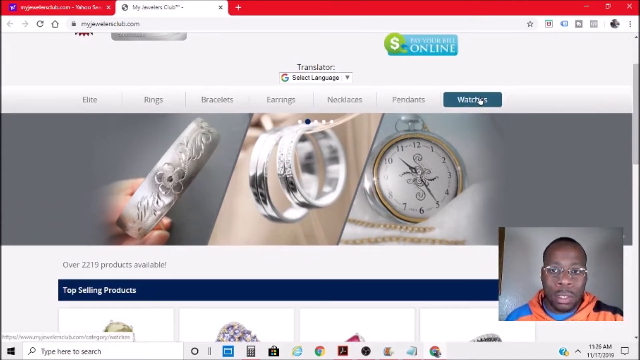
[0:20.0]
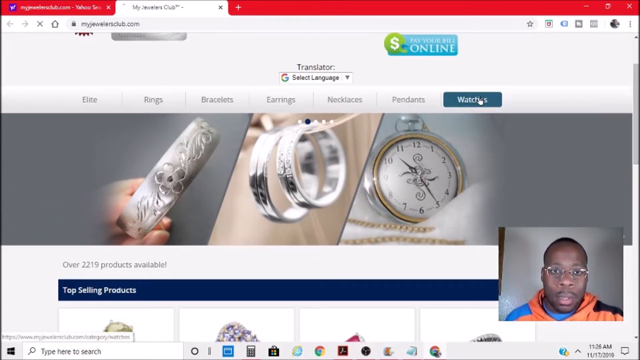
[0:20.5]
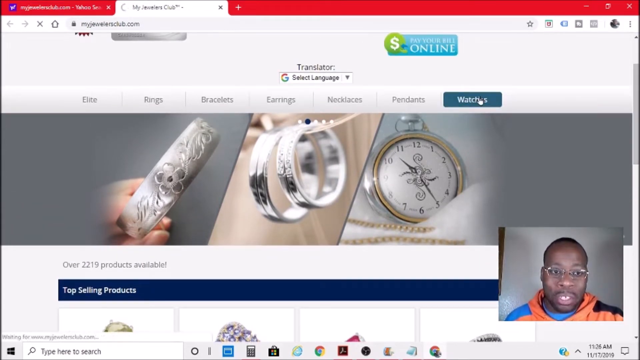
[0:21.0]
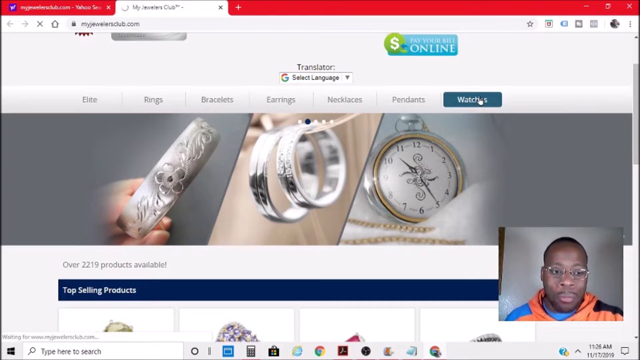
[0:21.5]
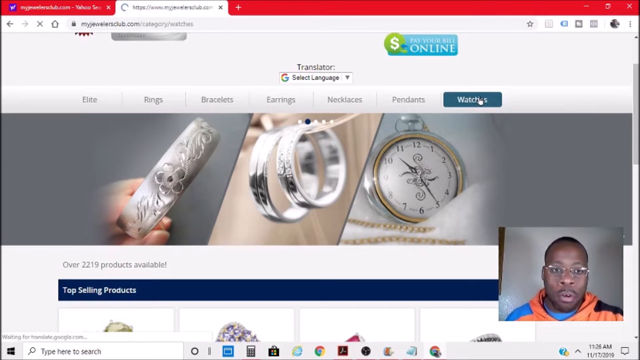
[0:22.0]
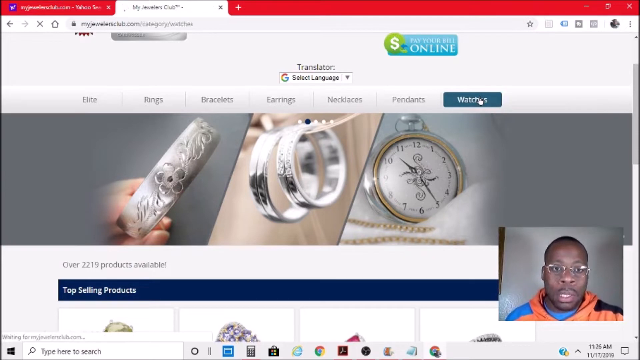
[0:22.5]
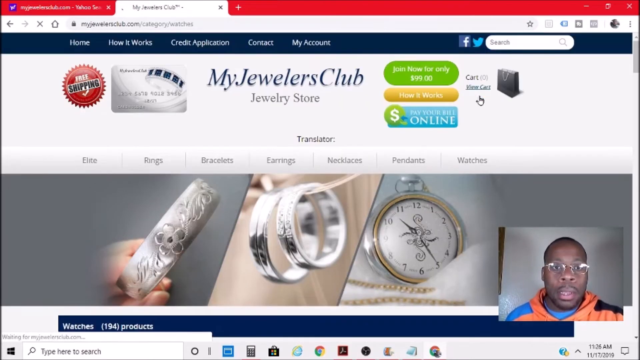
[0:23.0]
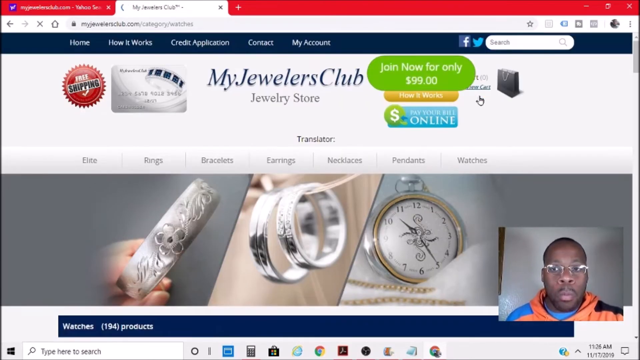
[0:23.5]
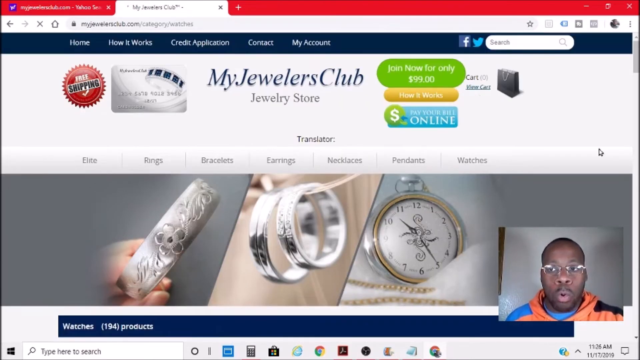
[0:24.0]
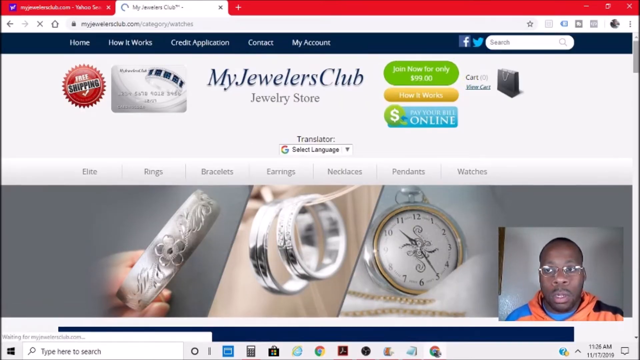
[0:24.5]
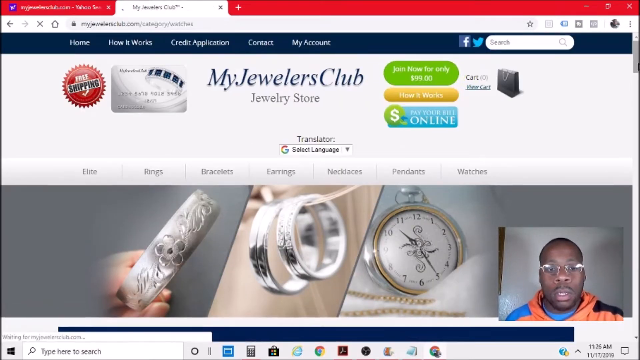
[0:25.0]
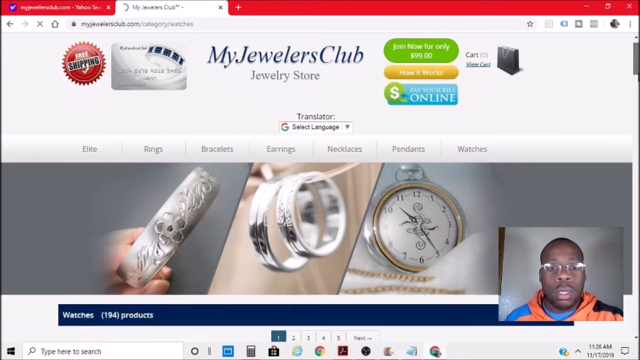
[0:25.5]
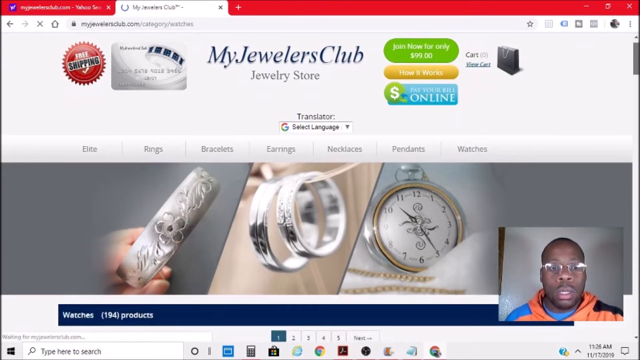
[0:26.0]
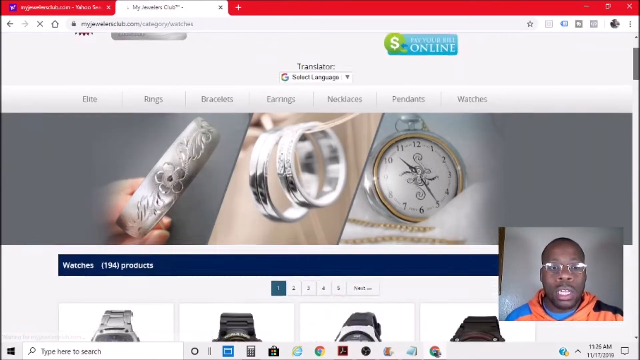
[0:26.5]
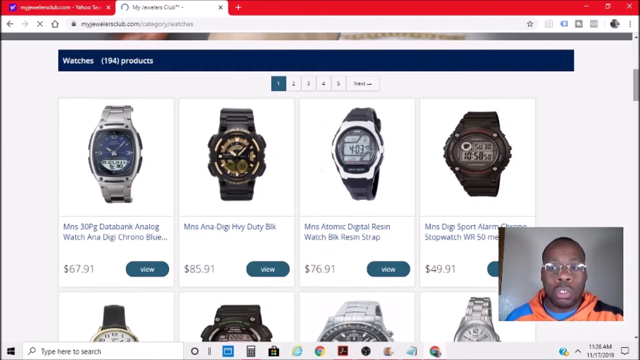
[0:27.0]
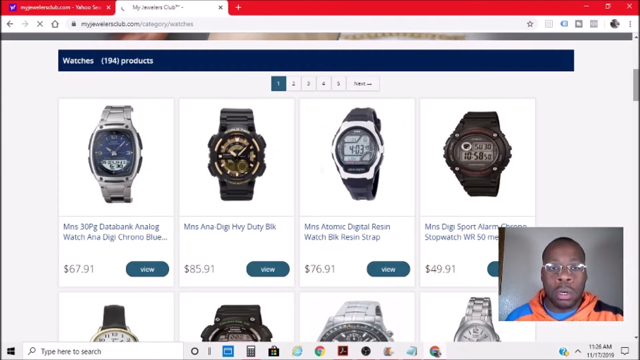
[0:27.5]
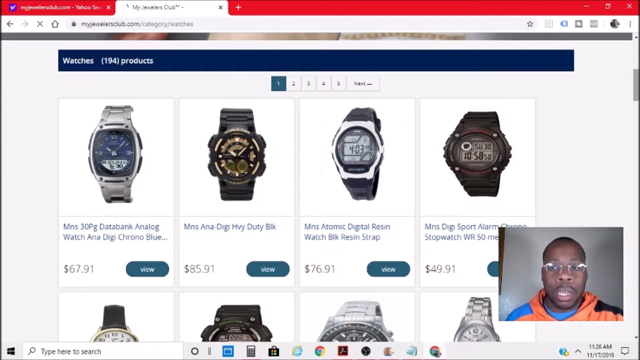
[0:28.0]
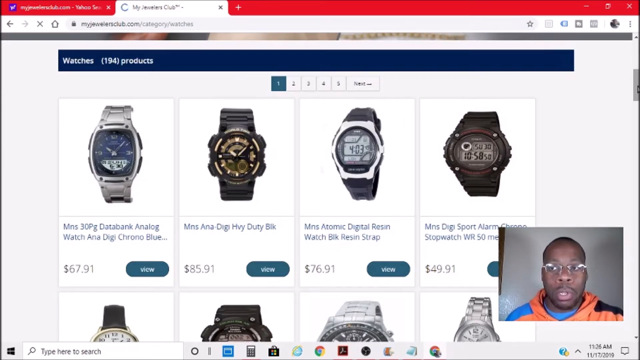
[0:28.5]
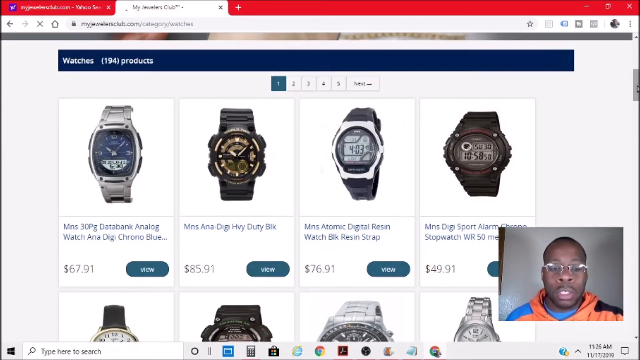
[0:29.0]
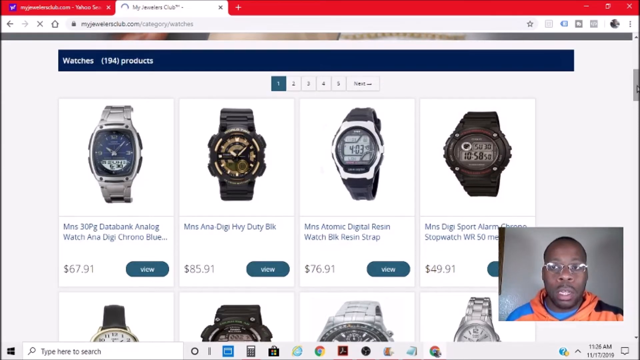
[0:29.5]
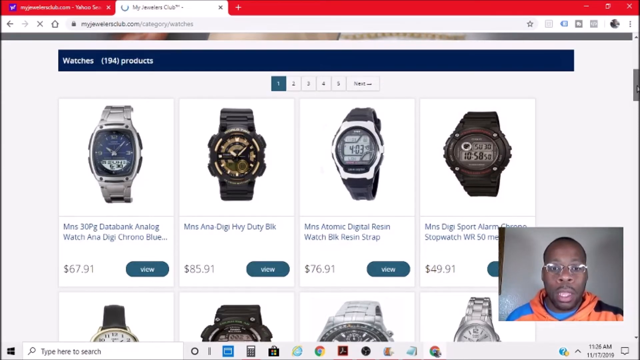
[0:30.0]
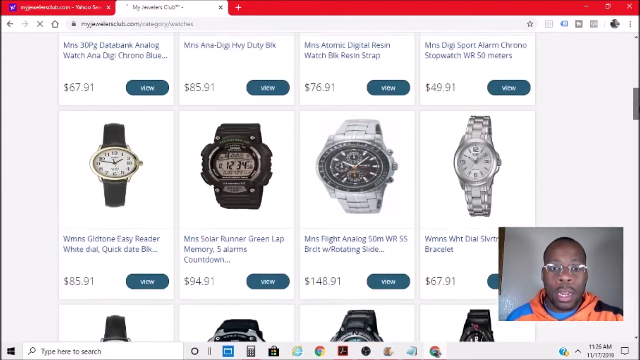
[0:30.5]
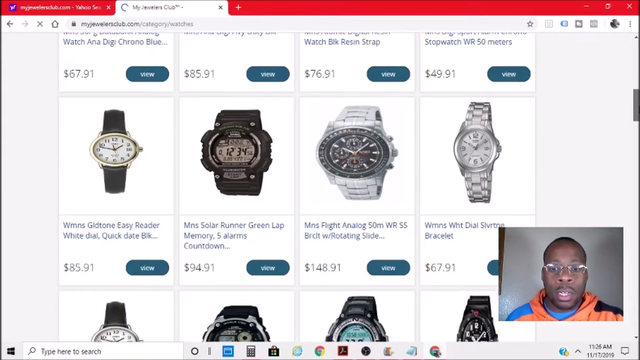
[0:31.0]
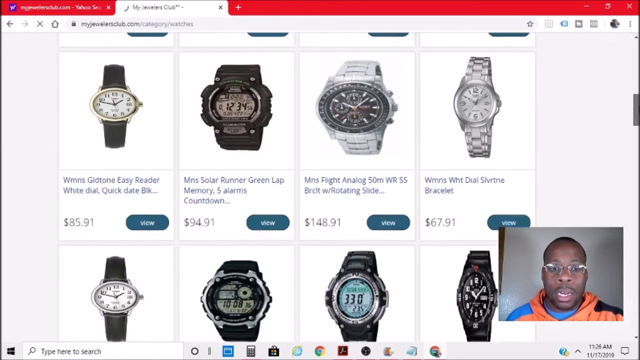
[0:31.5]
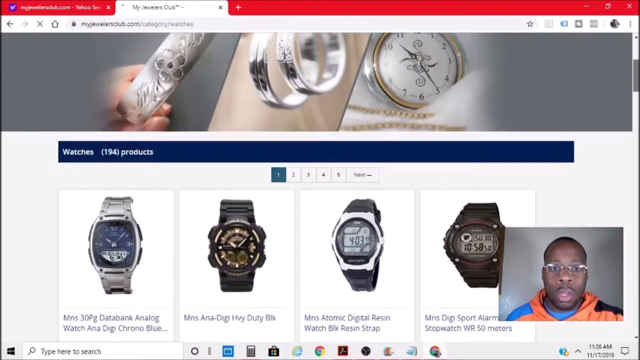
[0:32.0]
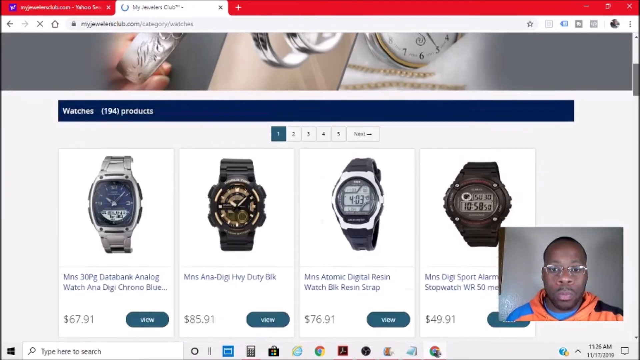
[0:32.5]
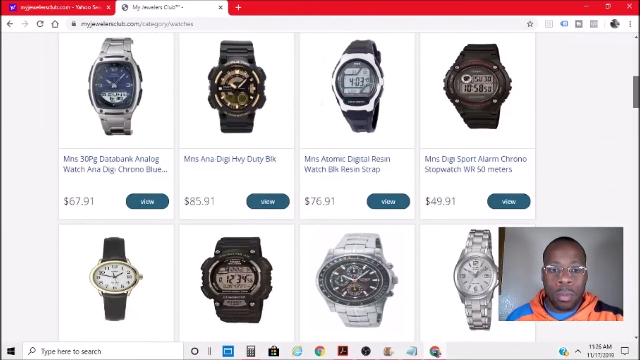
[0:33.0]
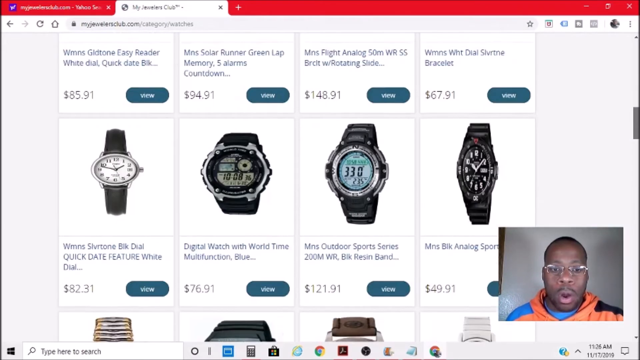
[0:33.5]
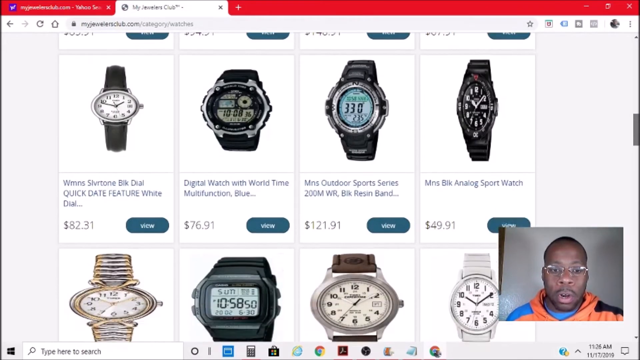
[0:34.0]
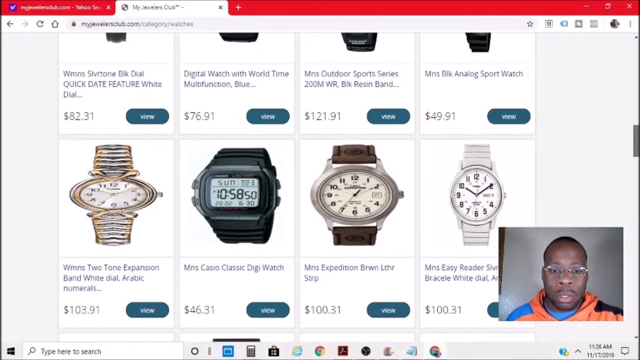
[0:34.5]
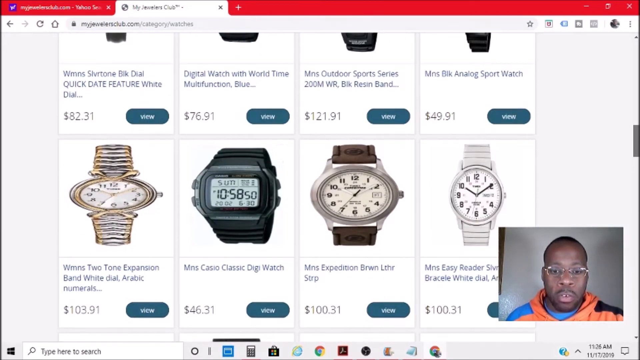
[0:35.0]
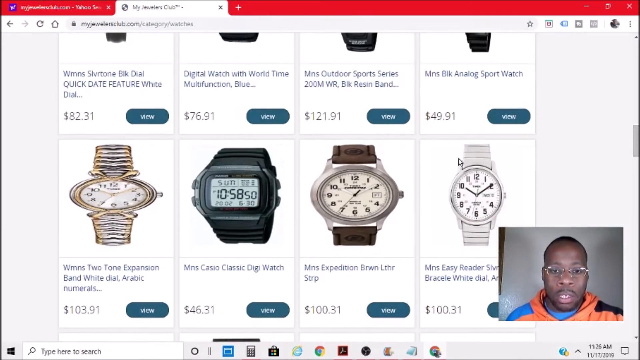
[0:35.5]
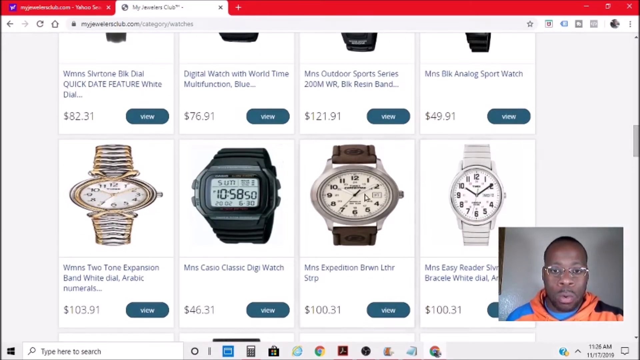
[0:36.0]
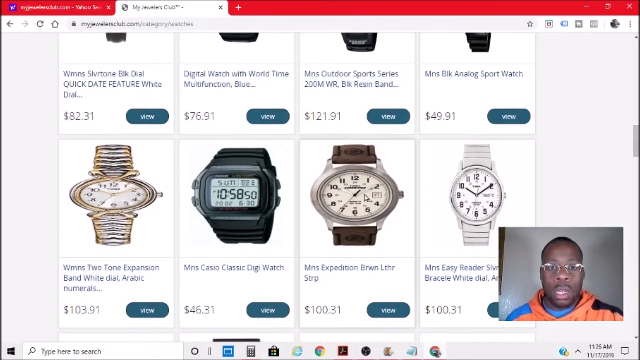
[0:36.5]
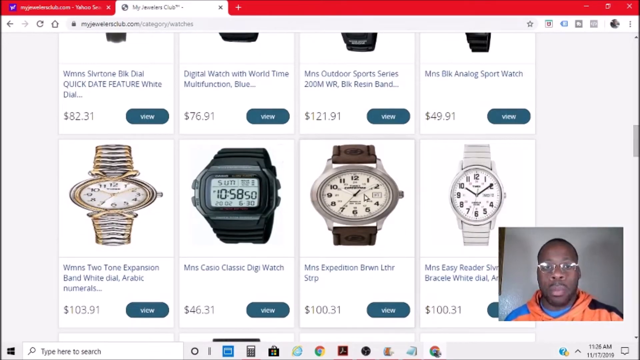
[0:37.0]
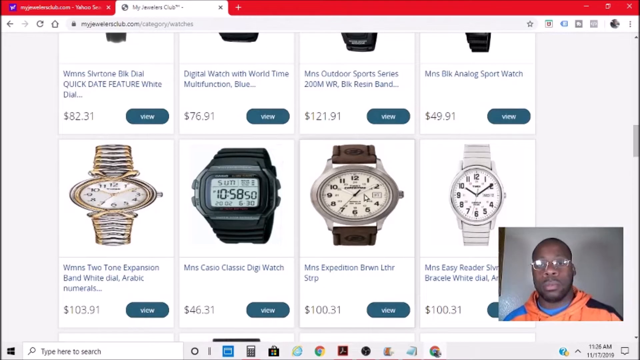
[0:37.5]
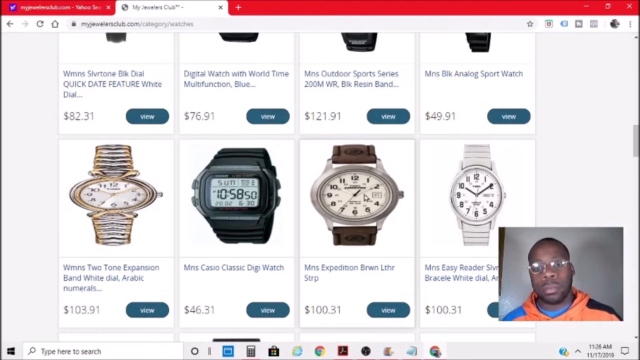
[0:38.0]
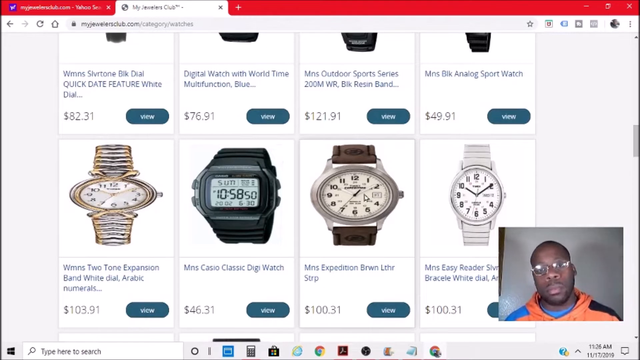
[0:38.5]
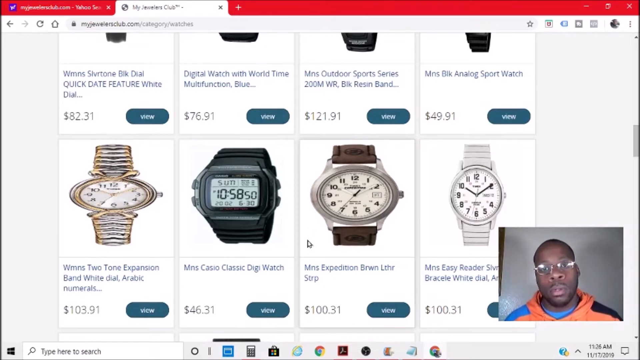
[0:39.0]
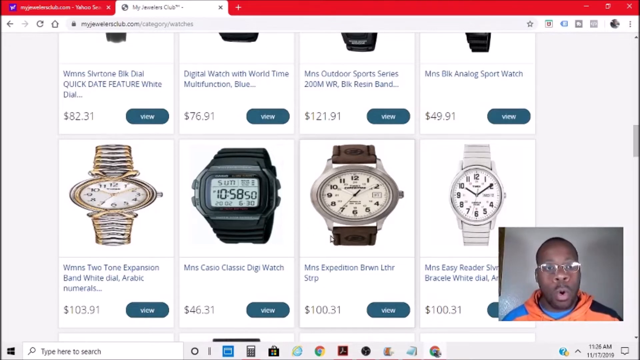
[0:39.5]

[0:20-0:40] On a live jewelry website, someone works a cursor and clicks on watches. A black man with glasses and an orange sweatshirt is in a box in the lower right corner, shown live. The person scrolls, finds a brown watch and clicks on it. The opening page shows random jewelry such as rings, bracelets and a stopwatch, and the site is called my jewelers club. The browser circles as it loads the website, then it finishes loading on the watches. The man keeps talking and looks like he may be in a room or working remotely.